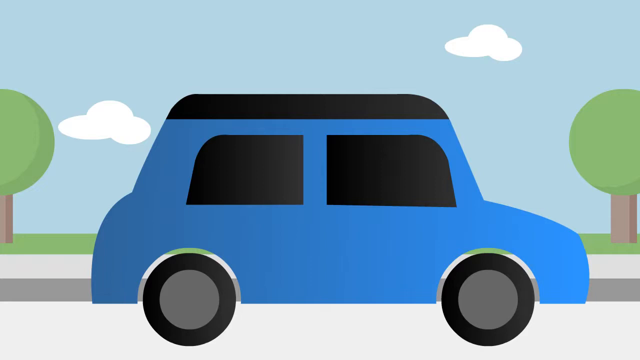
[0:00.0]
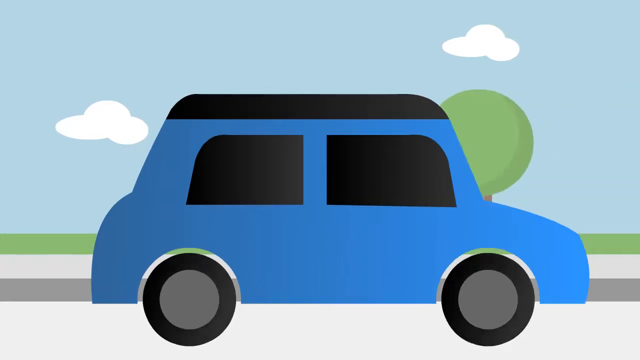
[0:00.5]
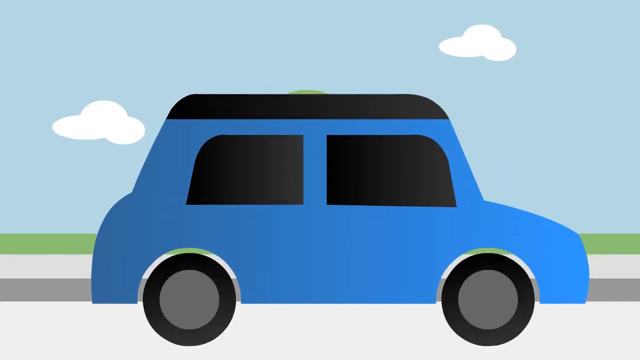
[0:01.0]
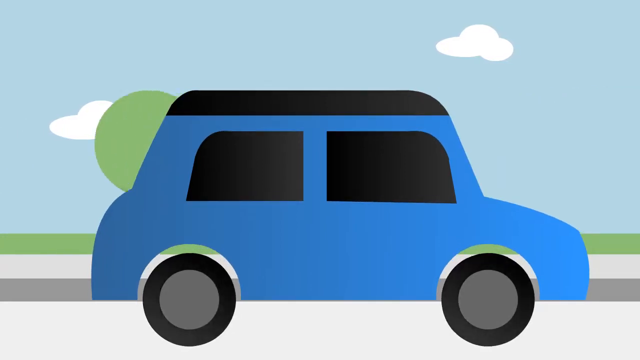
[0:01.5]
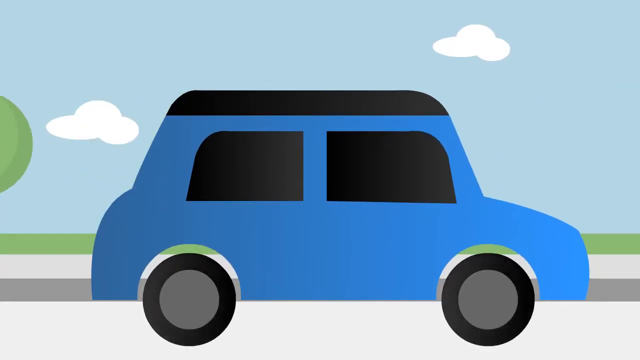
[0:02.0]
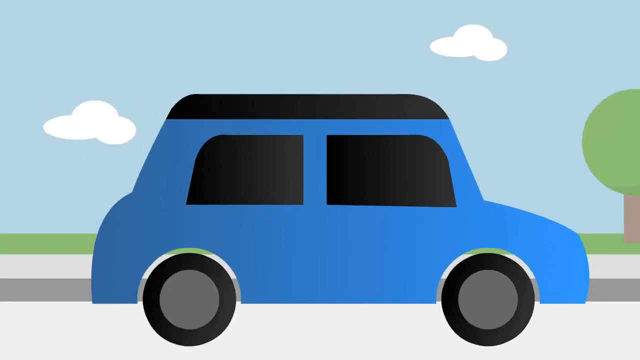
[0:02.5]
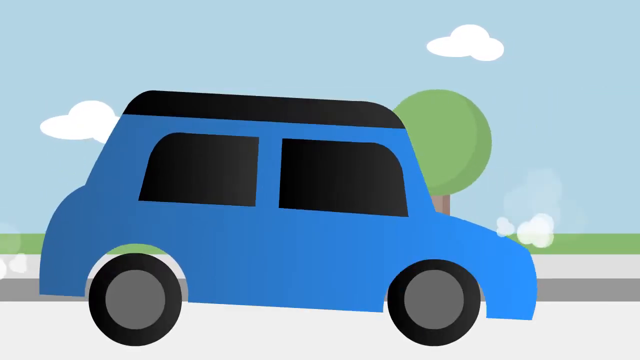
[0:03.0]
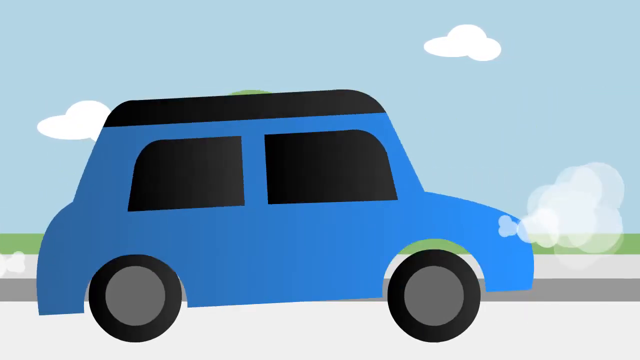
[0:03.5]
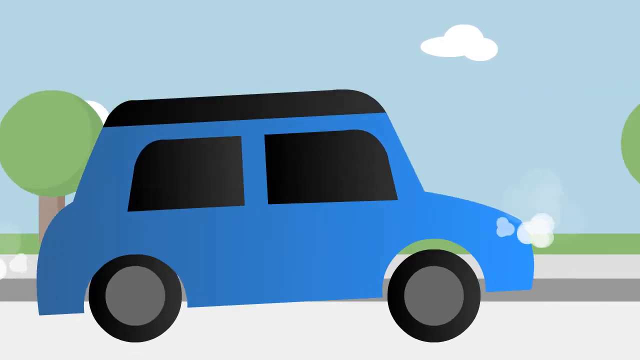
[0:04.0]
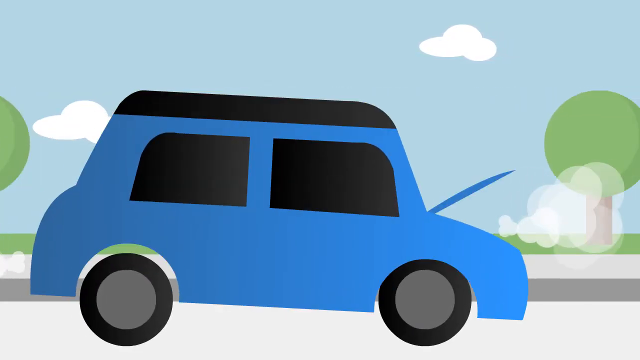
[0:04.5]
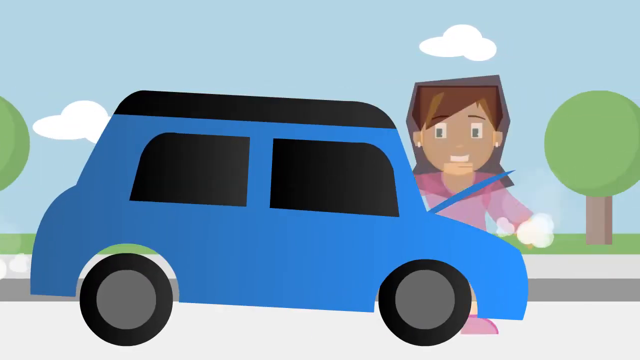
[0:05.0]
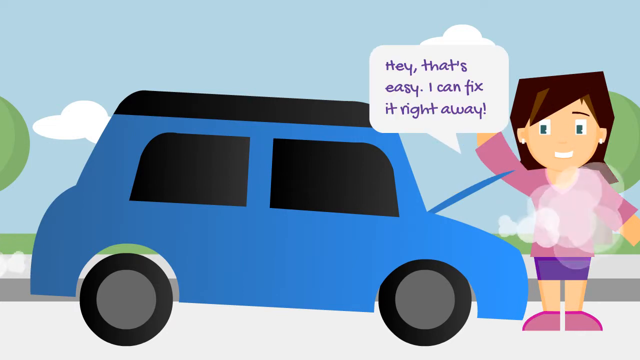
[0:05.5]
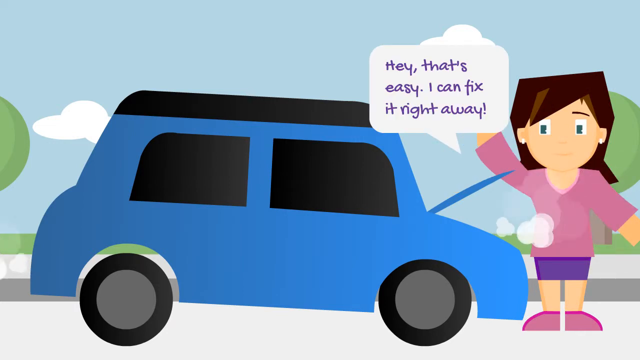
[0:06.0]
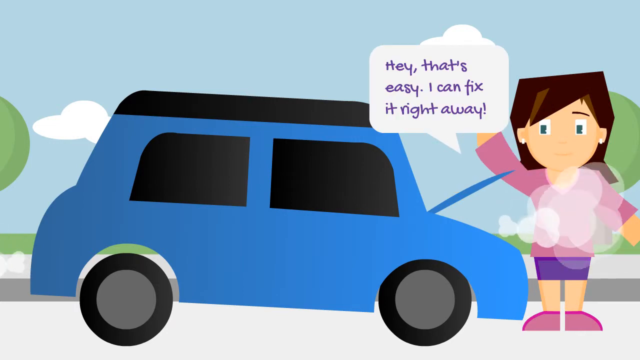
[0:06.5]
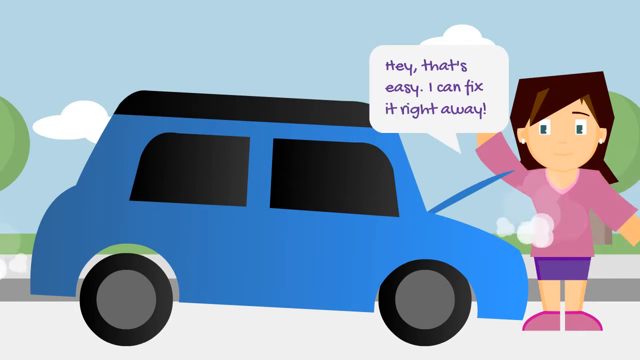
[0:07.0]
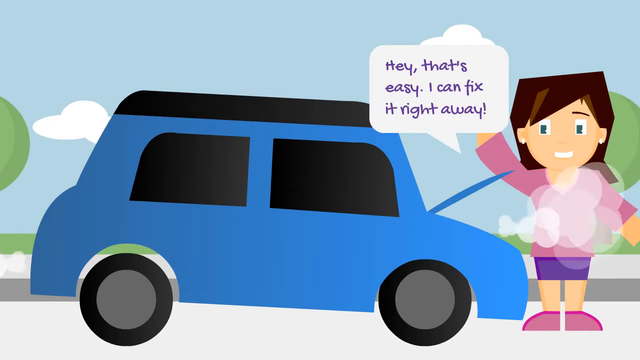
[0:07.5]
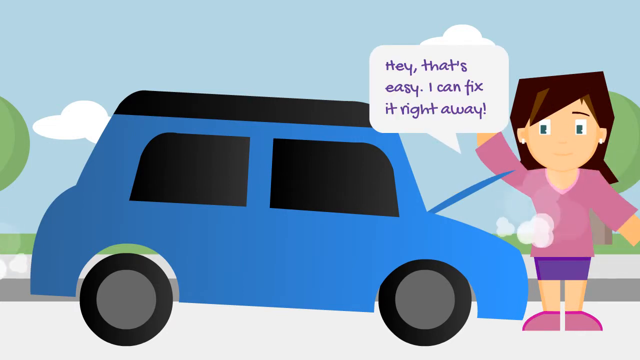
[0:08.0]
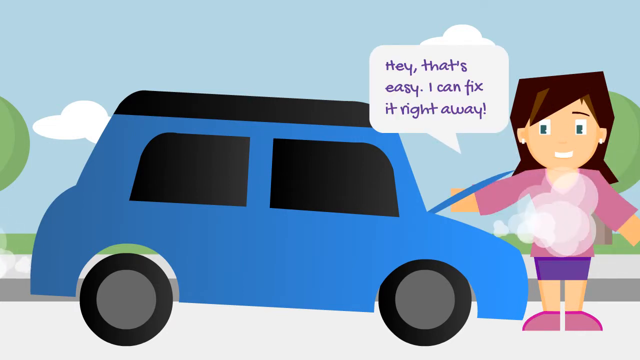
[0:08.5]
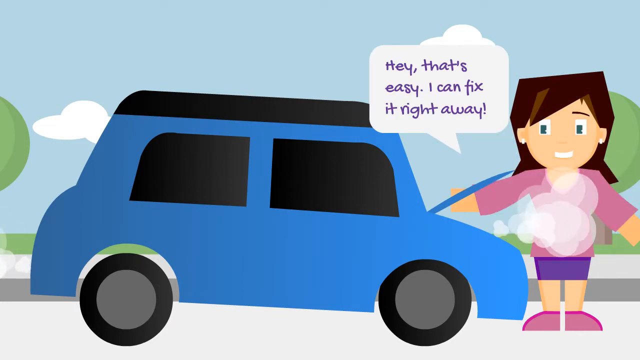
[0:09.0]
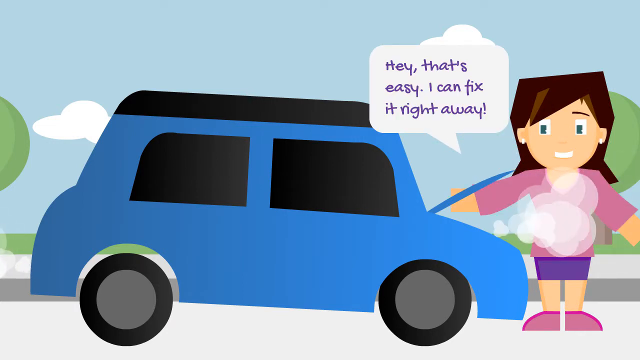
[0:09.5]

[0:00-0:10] A cartoonish drawing shows a blue car on a road on a sunny, clear day, with clouds in the sky behind it and very rudimentary trees in the background. The car travels from left to right. Suddenly it starts to shake, and smoke or steam starts coming out of the engine. The car stops, the hood pops up, and a woman appears at the front of the car. The car appears to have broken down. She says, "Hey, that's easy, I can fix it right away." She looks into the engine, deciding what she can do to fix the car.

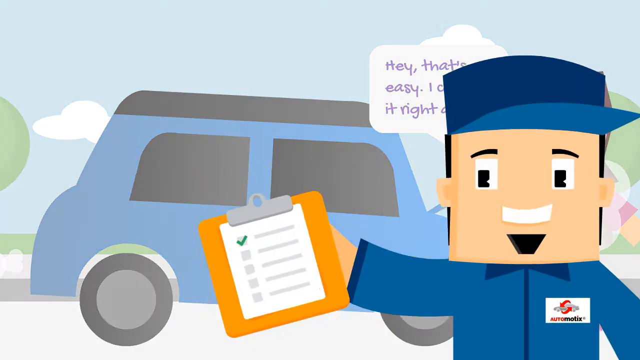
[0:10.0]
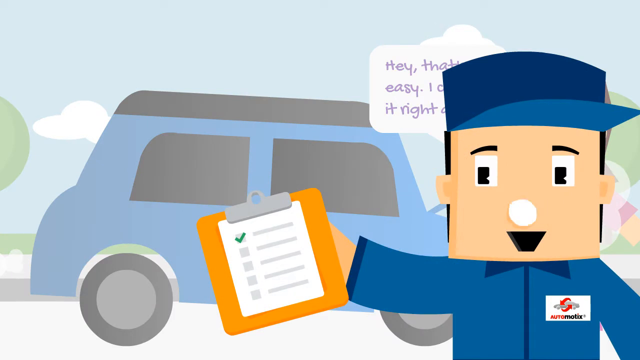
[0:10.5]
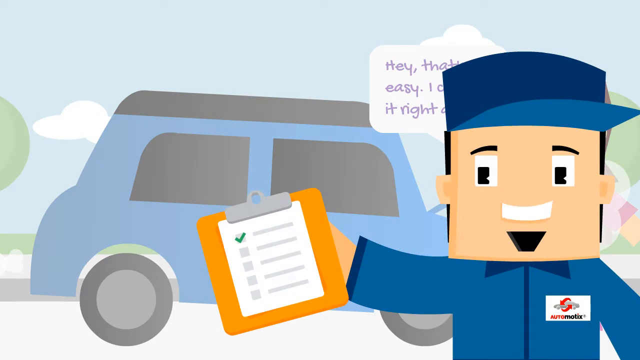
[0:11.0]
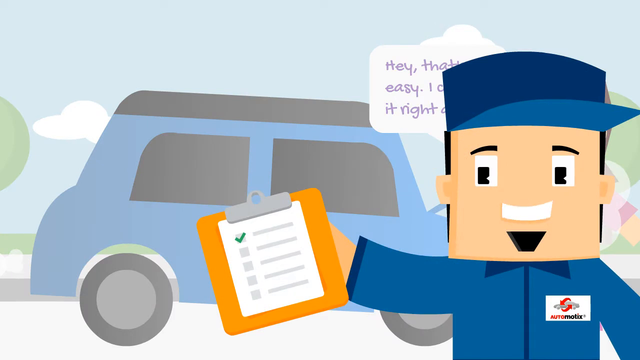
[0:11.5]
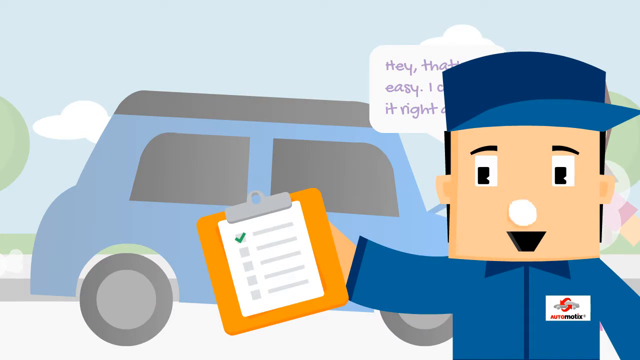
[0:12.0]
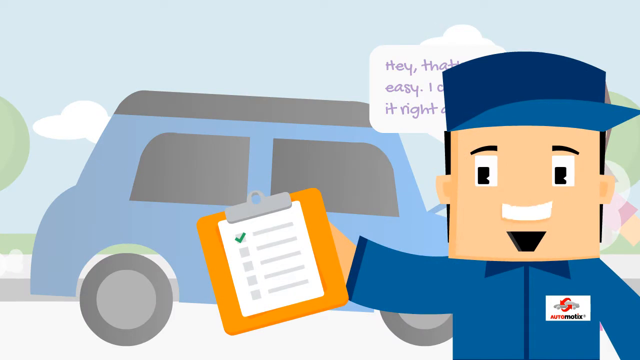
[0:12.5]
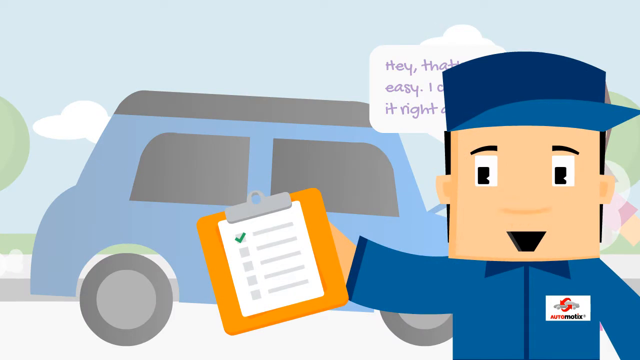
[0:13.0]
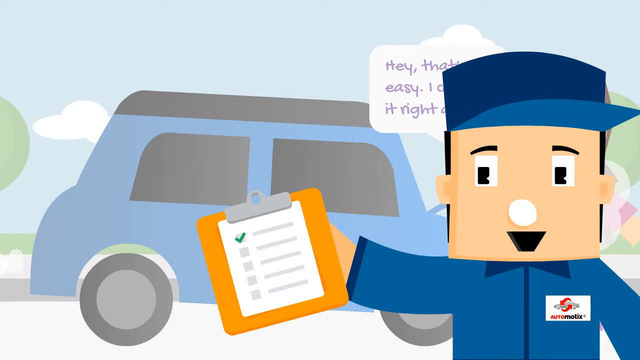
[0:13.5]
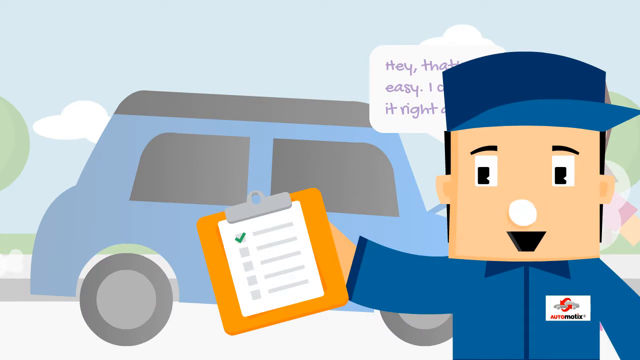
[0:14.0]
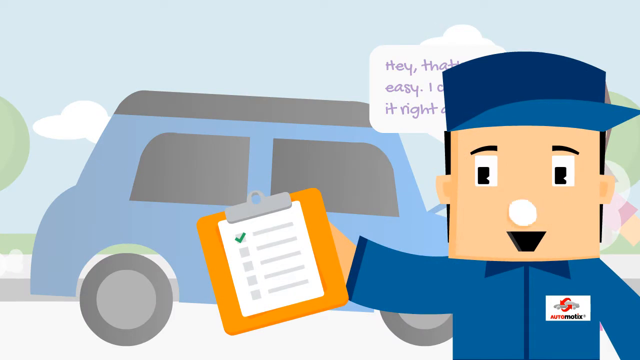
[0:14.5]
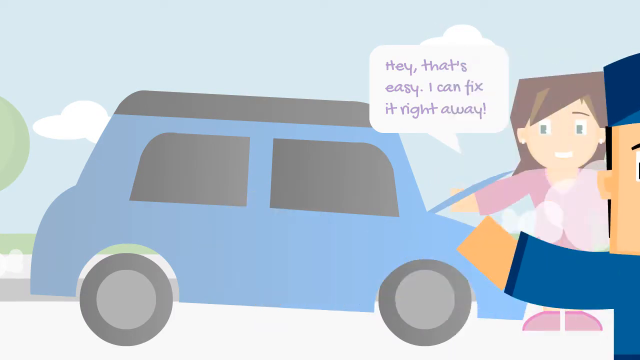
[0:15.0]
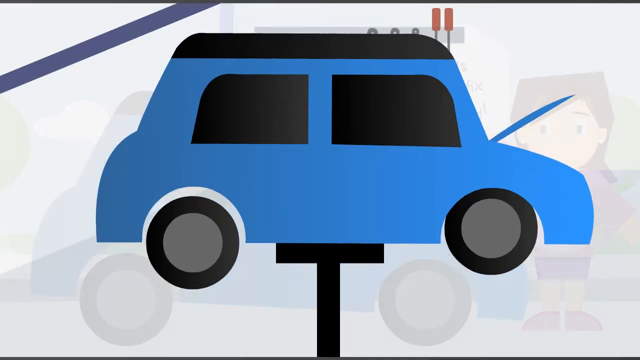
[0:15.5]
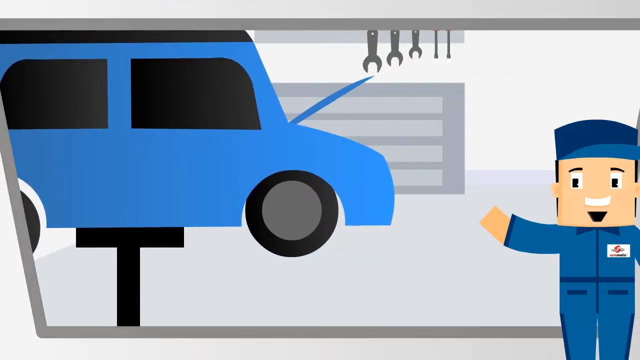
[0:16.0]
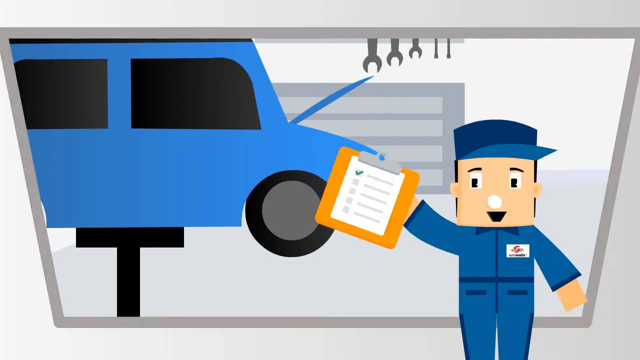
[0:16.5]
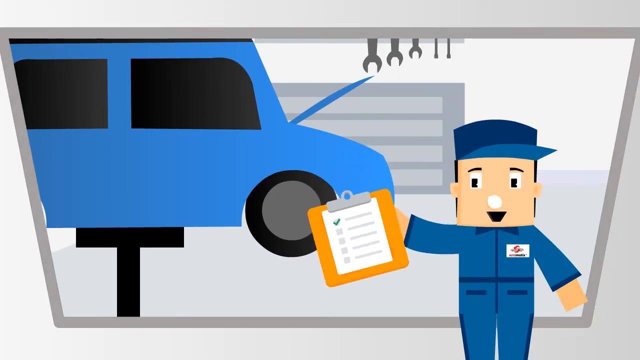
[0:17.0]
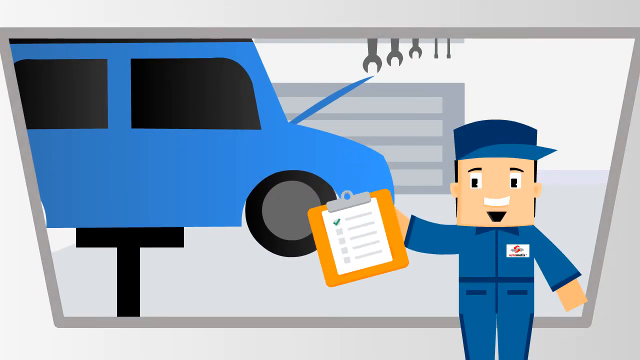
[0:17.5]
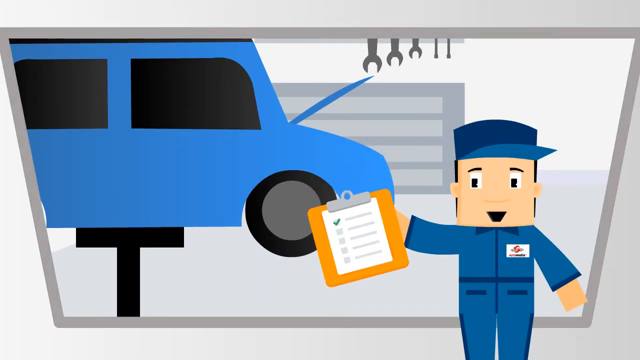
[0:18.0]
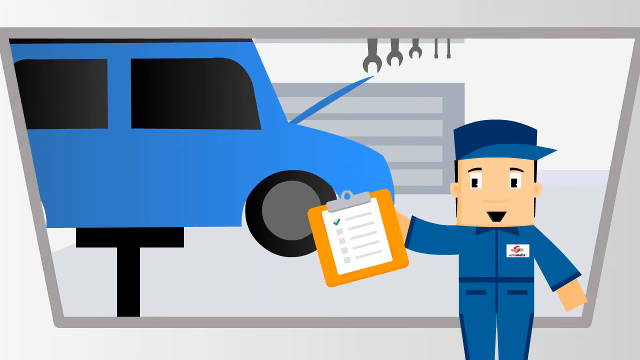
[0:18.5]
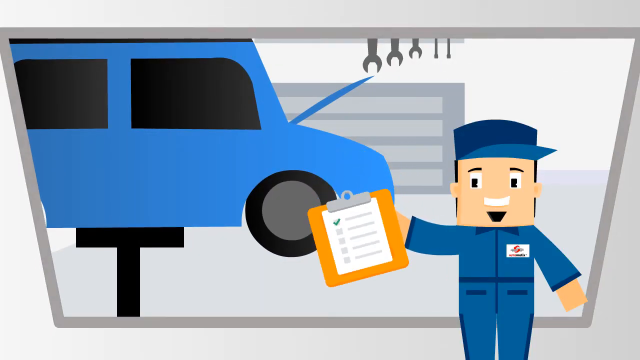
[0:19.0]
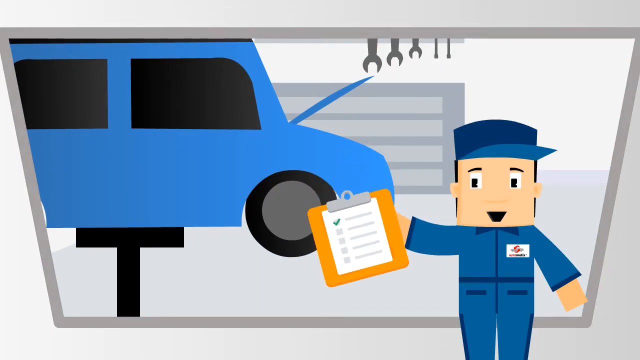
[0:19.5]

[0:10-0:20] A drawing shows a man in a blue outfit with a blue cap, suggesting some sort of uniform. He carries a clipboard with a checklist on it, the top item checked. Behind him, grayed out a bit, is a blue car, and a woman just behind him is saying, "Hey, that's easy, I can fix it right away." The car appears to be broken down. It is outside on a clear day, with a sky in the background holding a couple of clouds and some rudimentary trees. The mechanic speaks to the camera, and then the location changes to what looks like a mechanic's bay, where the blue car is being lifted up so that a mechanic can look at it and diagnose it. The mechanic appears again with his checklist, speaking and waving the clipboard.